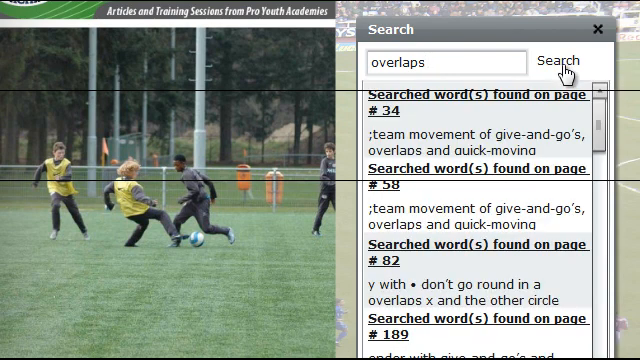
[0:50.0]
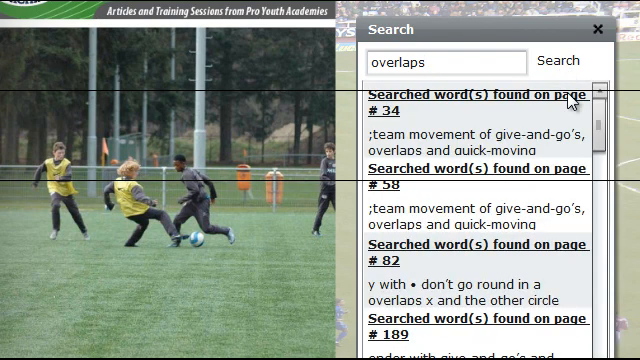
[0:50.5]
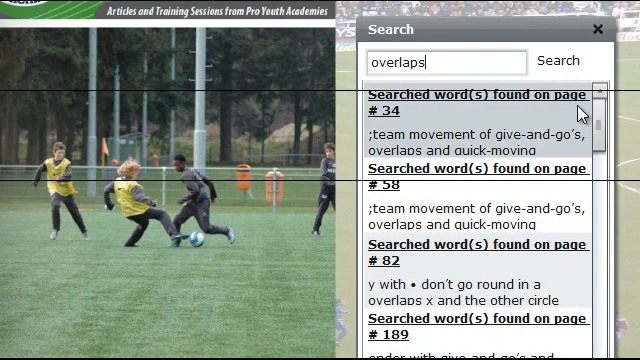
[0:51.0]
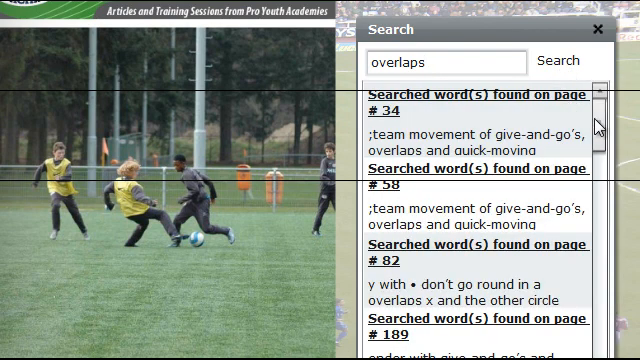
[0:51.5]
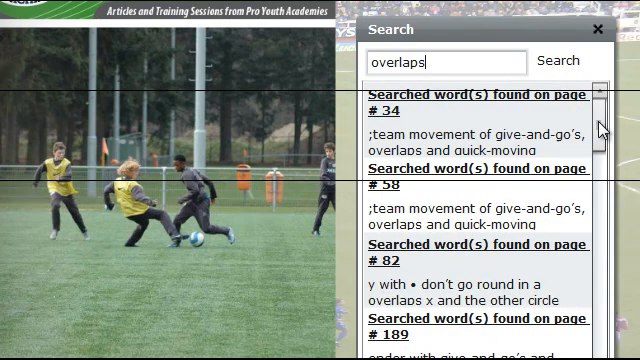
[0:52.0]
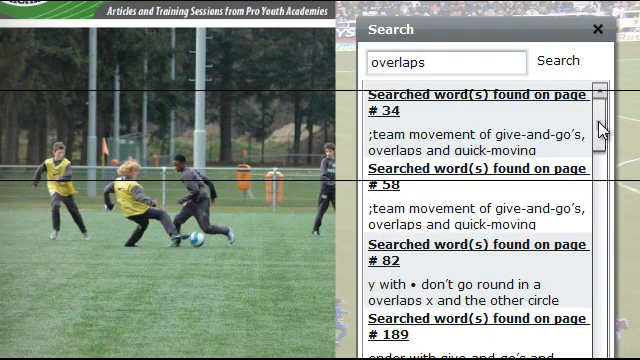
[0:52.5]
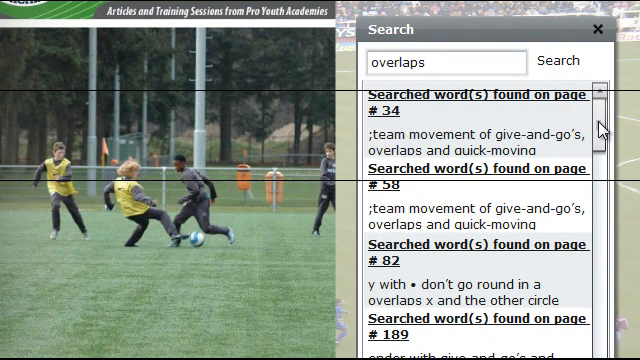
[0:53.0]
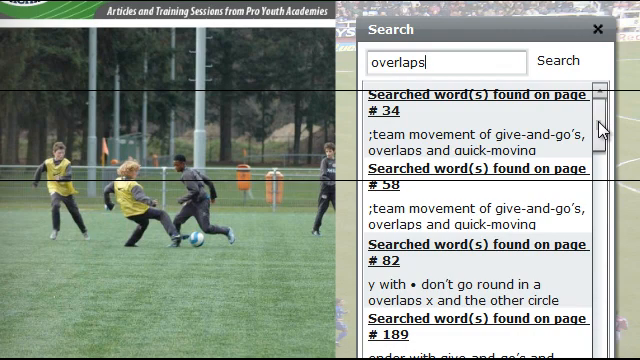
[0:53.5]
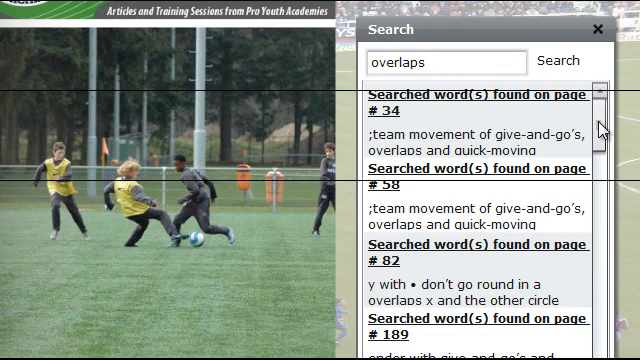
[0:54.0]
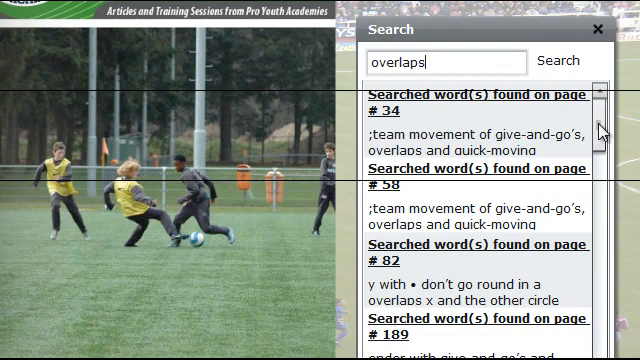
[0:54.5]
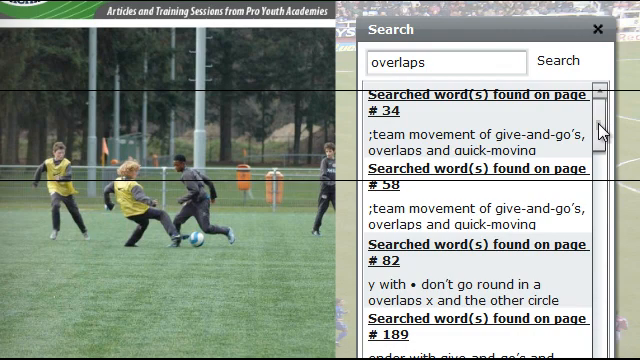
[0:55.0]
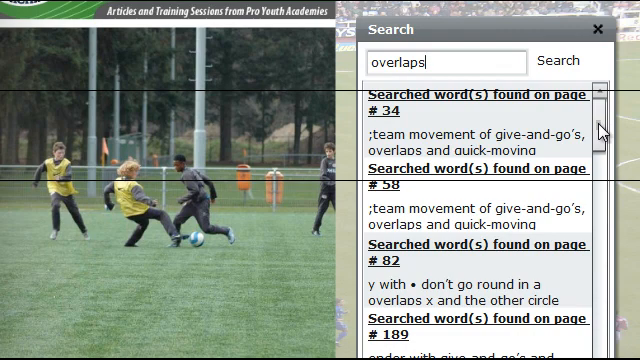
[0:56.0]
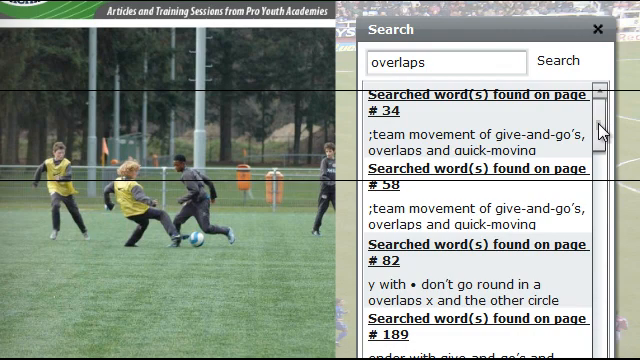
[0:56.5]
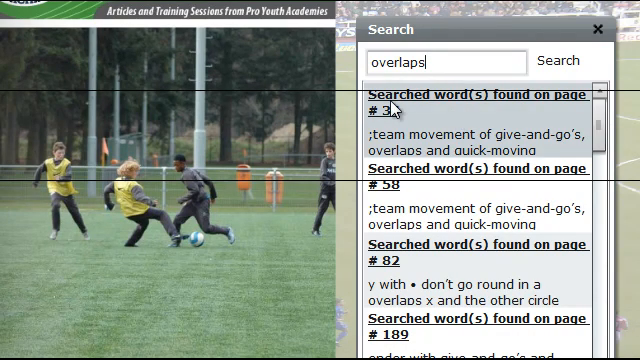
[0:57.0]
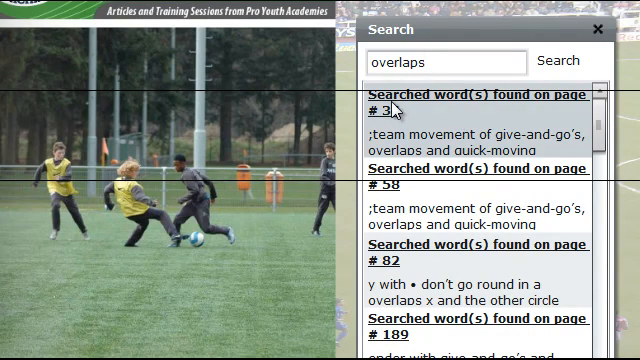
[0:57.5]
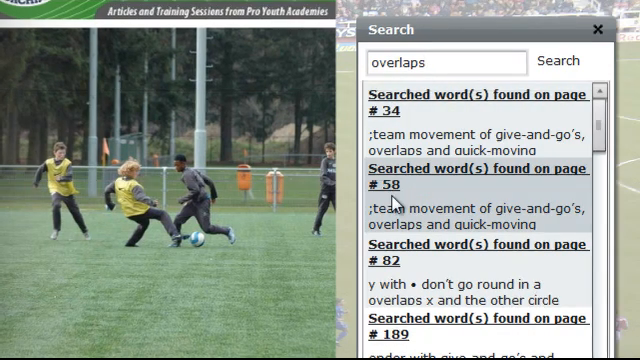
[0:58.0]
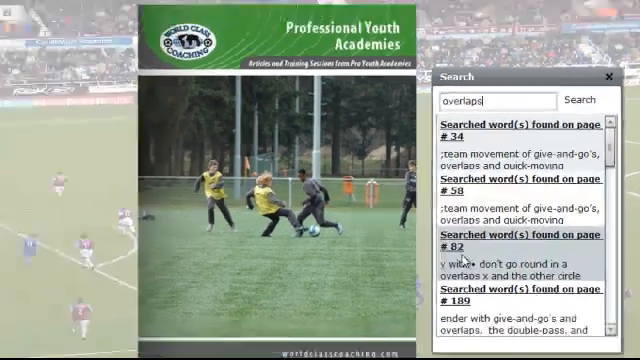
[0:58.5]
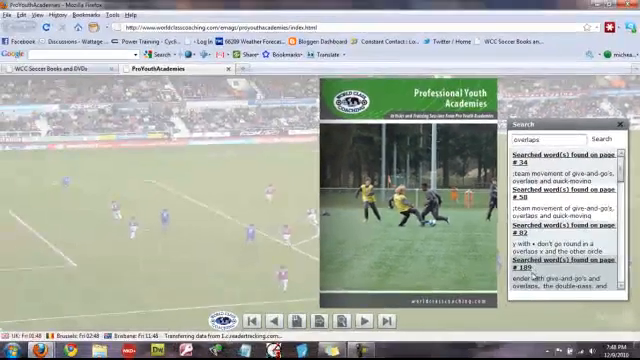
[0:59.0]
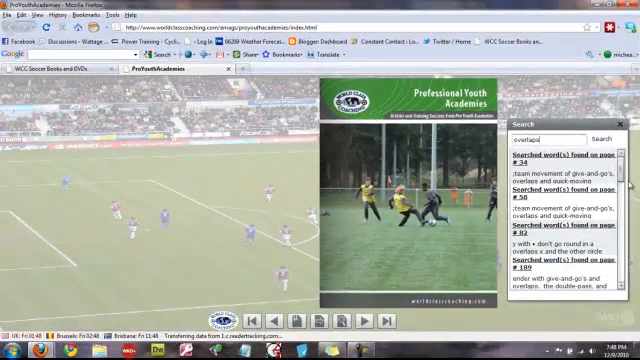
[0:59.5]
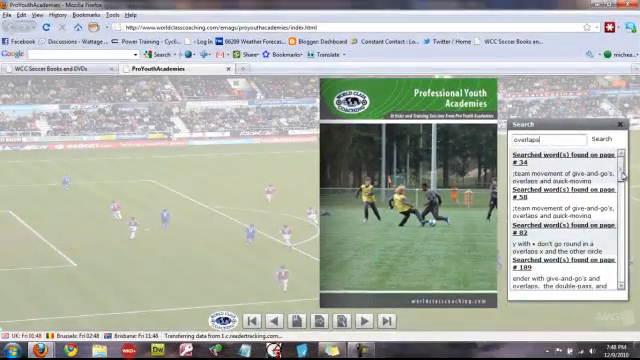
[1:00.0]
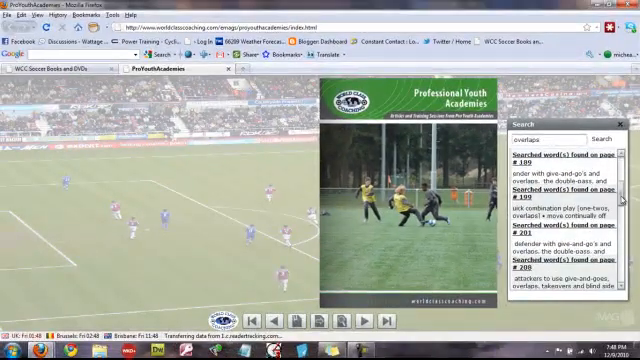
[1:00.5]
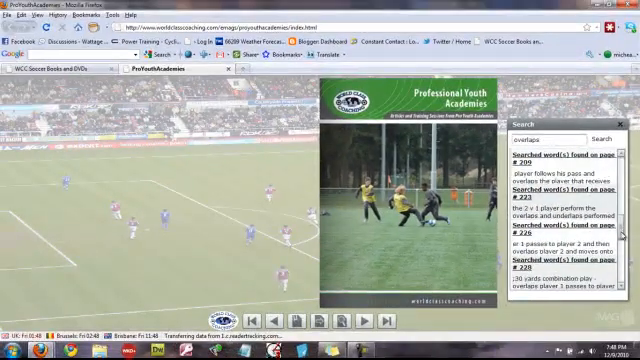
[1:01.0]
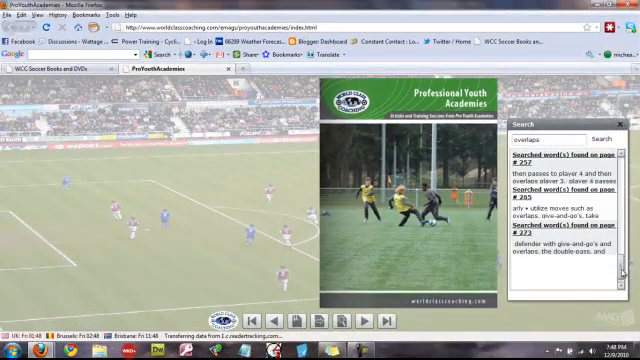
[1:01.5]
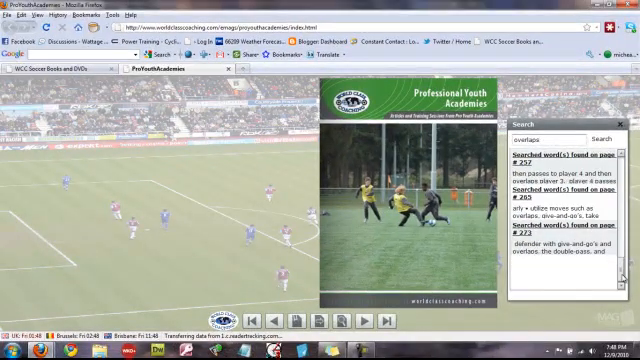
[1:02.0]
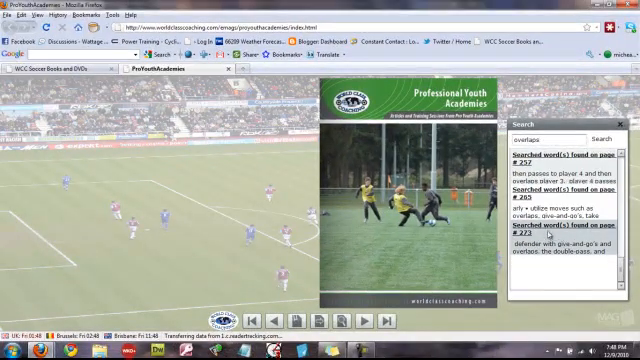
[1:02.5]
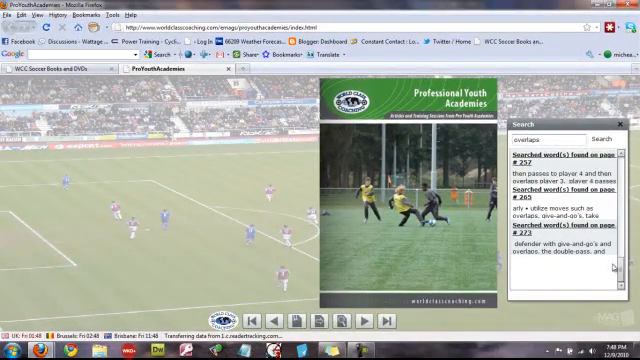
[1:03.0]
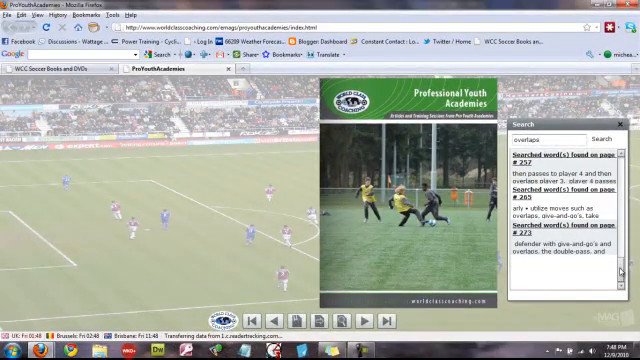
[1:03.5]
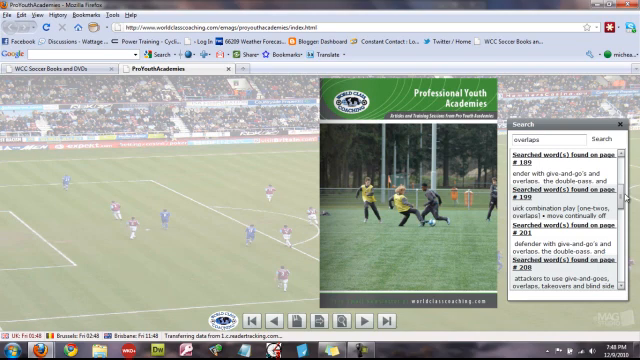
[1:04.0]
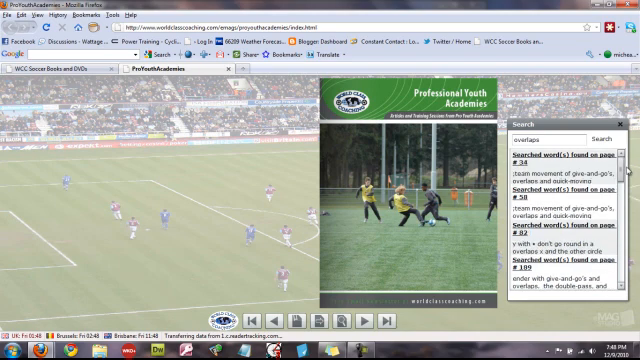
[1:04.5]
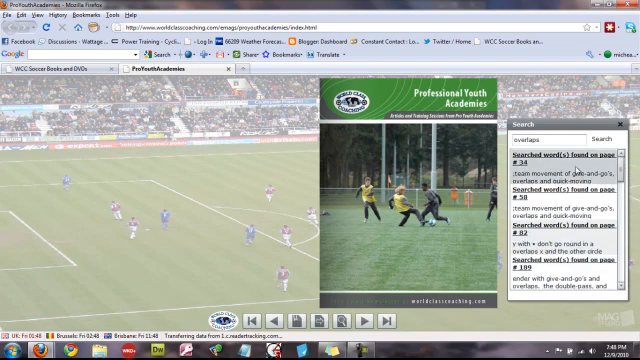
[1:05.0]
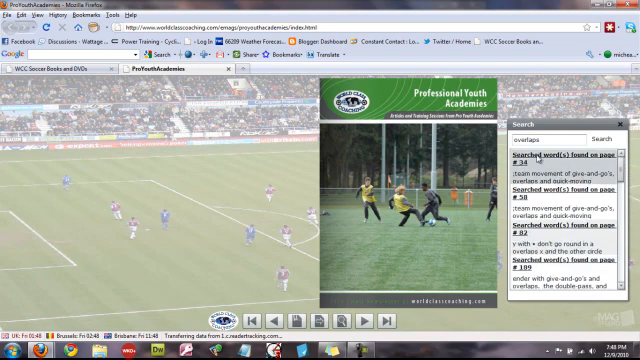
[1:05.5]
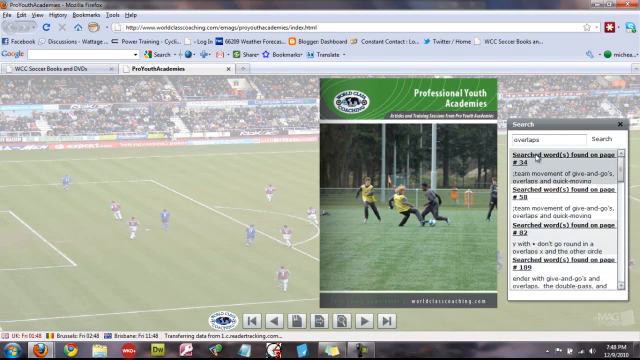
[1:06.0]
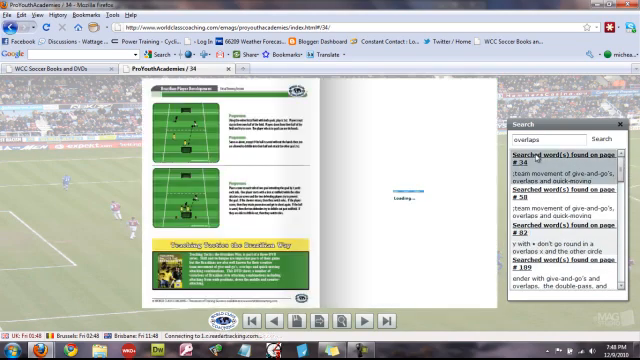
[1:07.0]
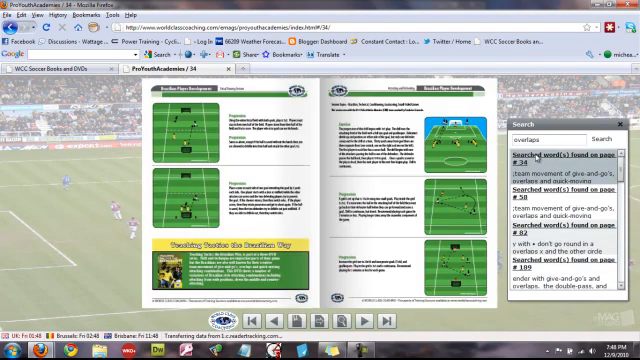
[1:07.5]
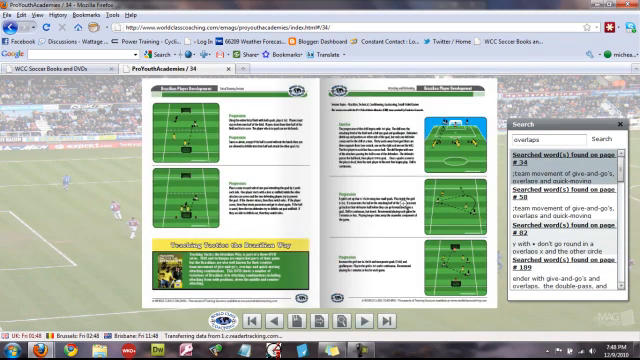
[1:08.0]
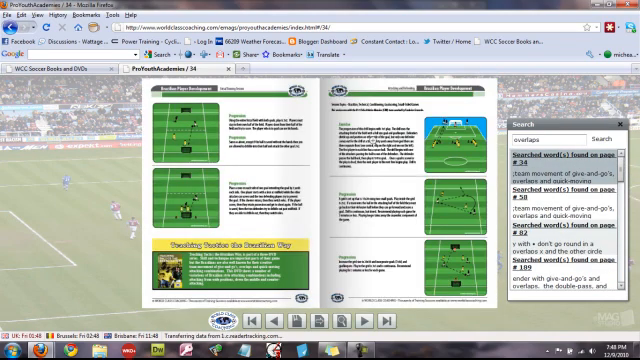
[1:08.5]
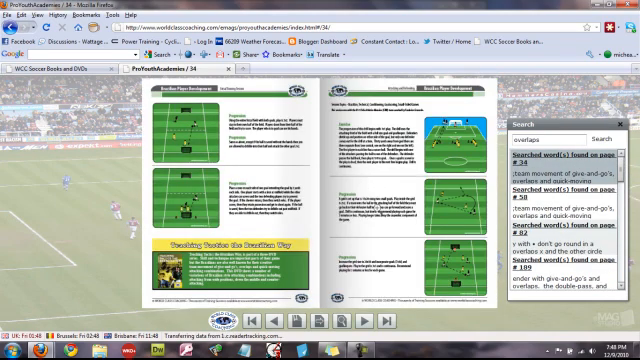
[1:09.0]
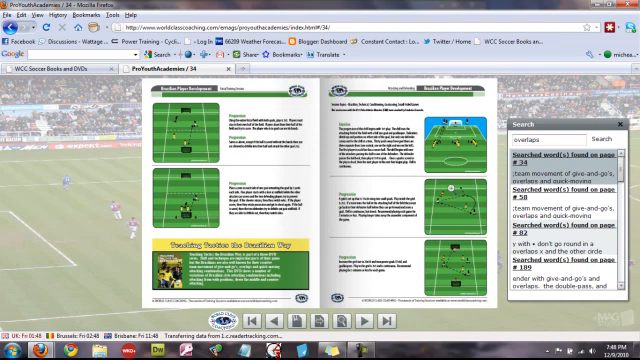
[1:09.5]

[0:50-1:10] The screen has some soccer players in the background. On the right side of the screen is a search bar at the top, with "search" on a gray background, and below it the page is white. The search bar contains "overlaps", and a right index finger pointer points at the search. Below are the search results, one saying "search words found on page number 34" and then a line beginning "team movements of" that also mentions overlaps and quick moving, with more search results below. The pointer moves to the scroll bar on the right side, then to the search results, and the page zooms out to show a soccer field in the background. The pointer grabs the bar and scrolls all the way down to the bottom, then all the way back up to the top, and clicks the top search result. Some pictures of soccer fields show up.